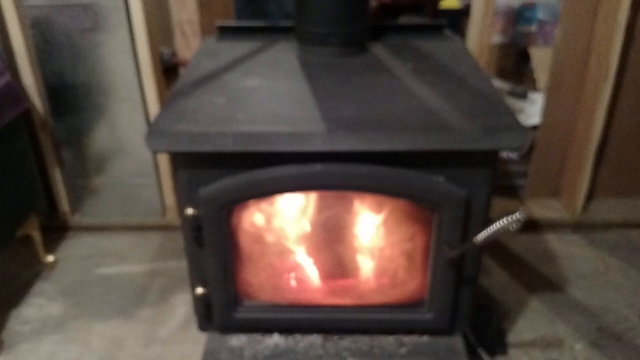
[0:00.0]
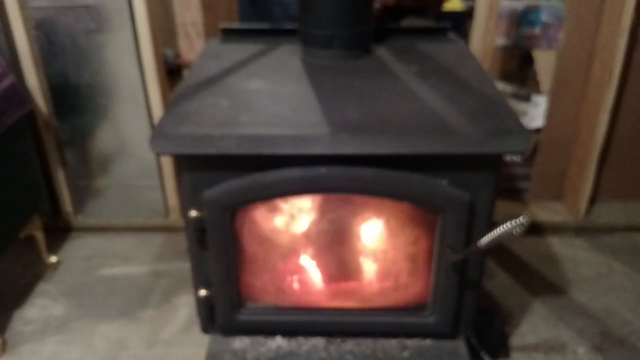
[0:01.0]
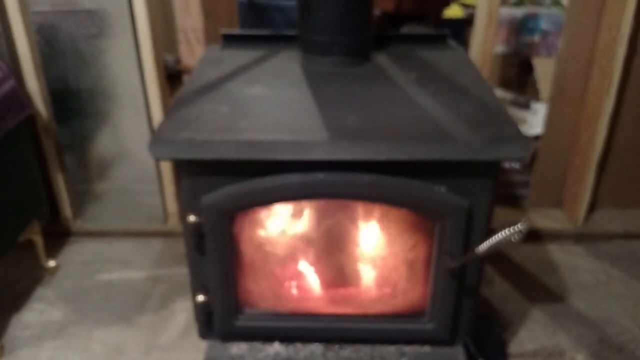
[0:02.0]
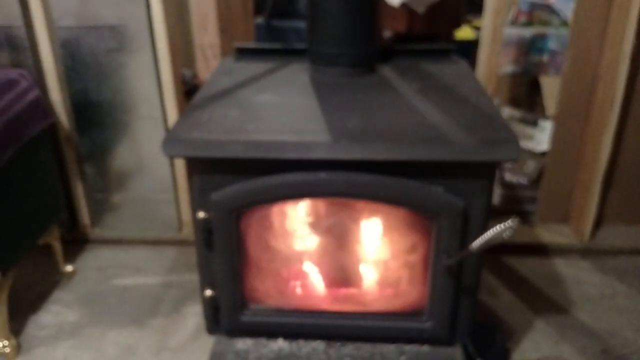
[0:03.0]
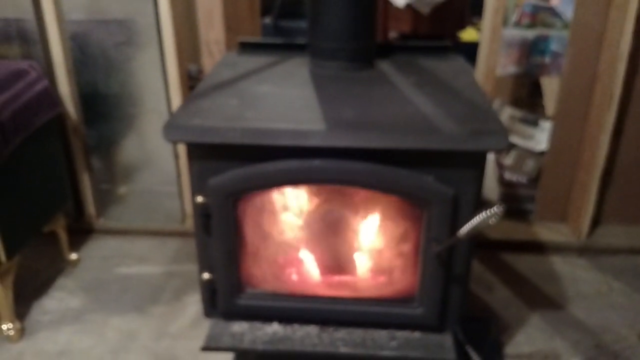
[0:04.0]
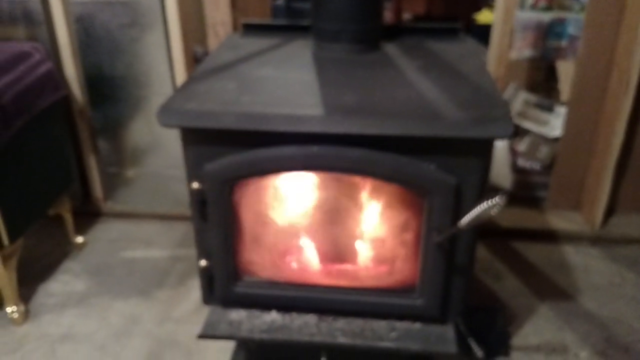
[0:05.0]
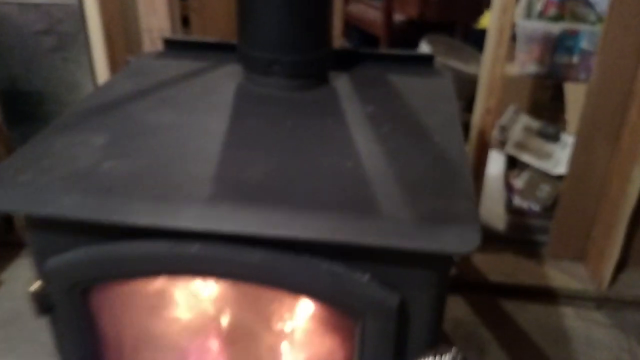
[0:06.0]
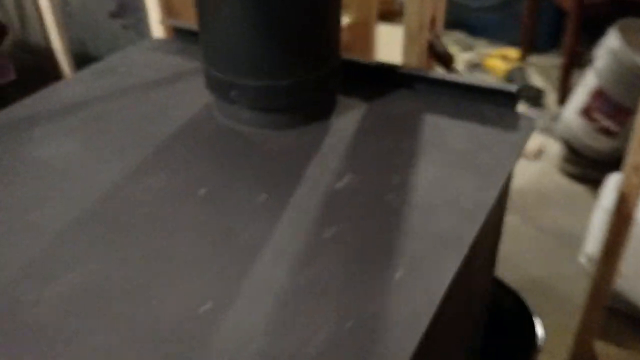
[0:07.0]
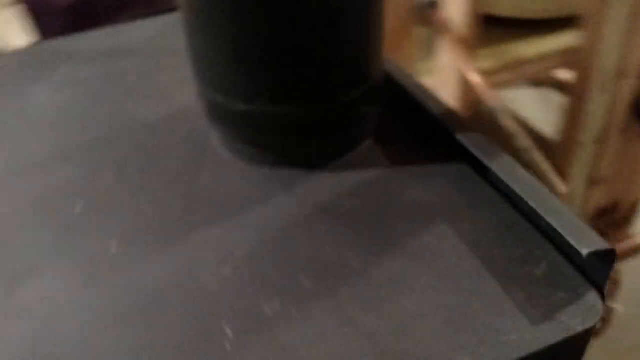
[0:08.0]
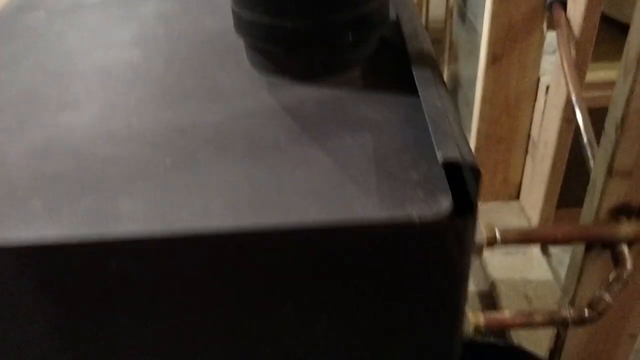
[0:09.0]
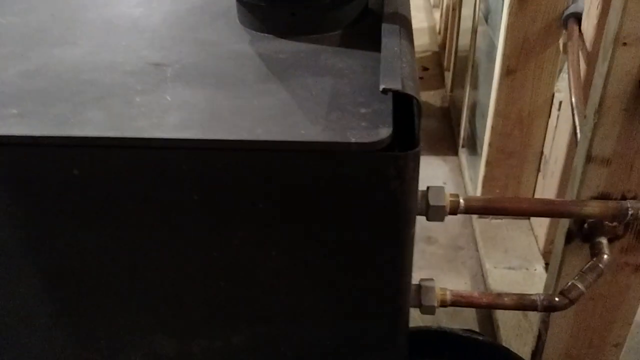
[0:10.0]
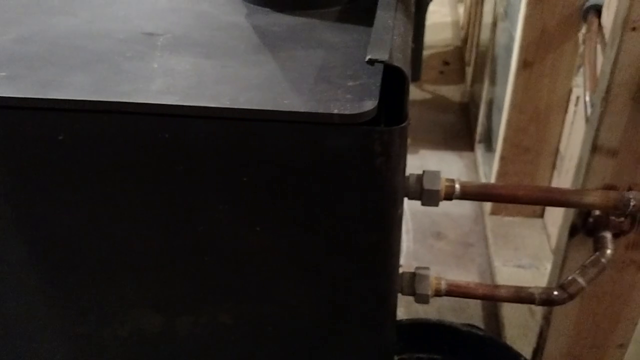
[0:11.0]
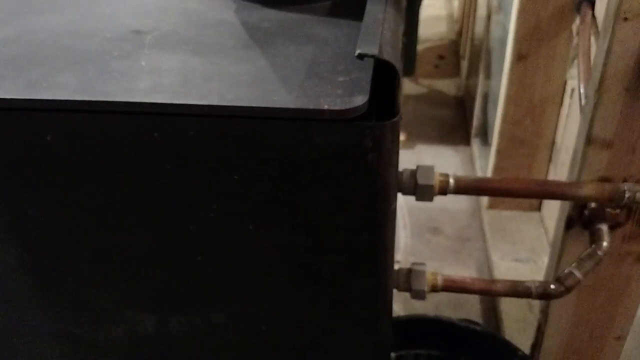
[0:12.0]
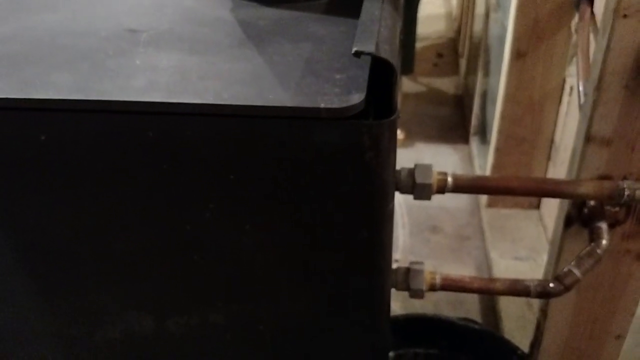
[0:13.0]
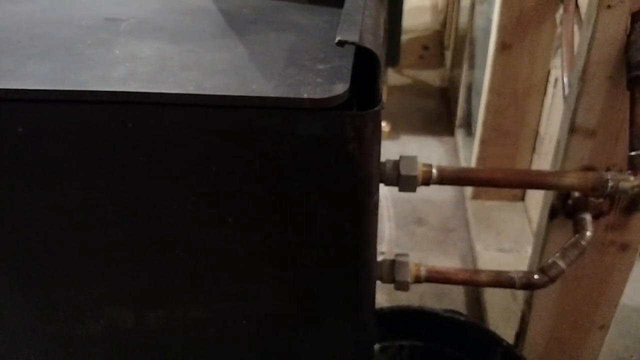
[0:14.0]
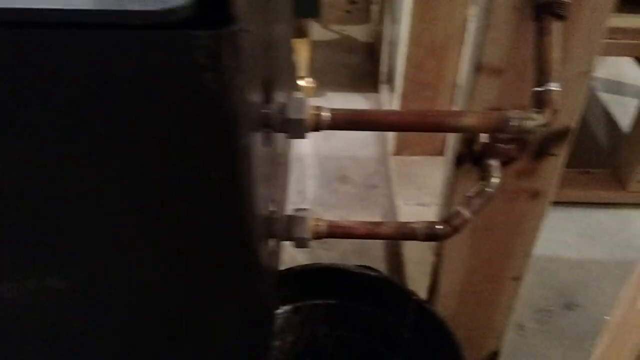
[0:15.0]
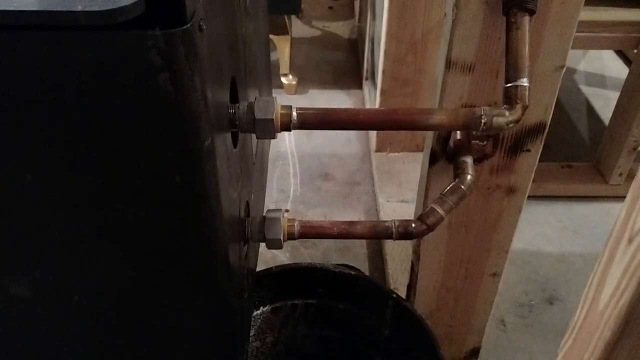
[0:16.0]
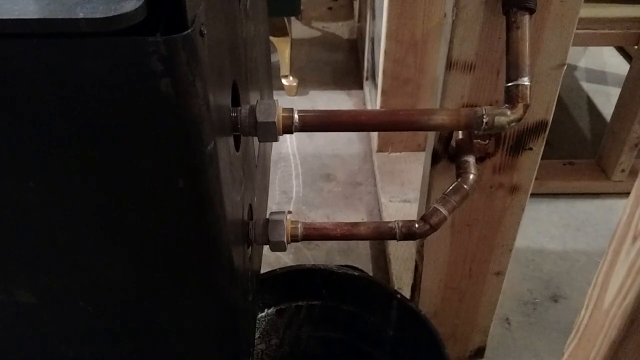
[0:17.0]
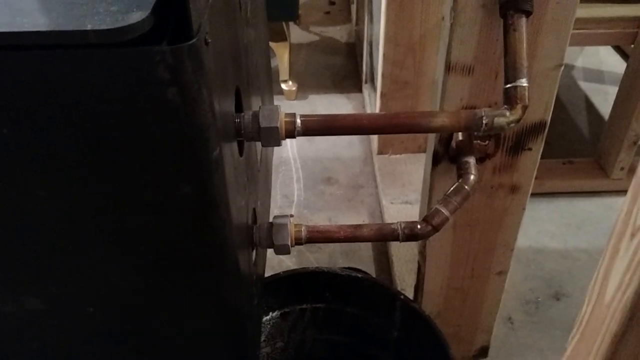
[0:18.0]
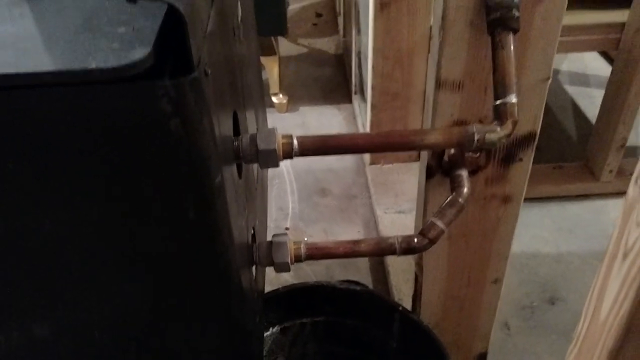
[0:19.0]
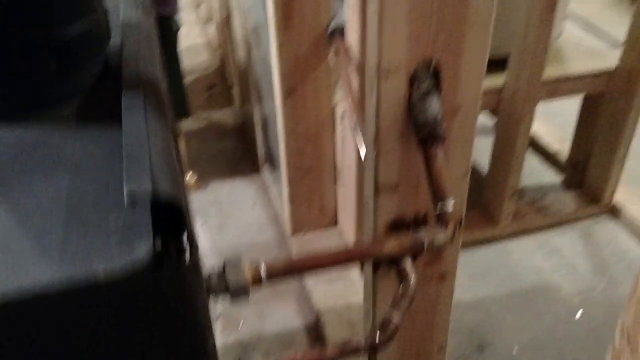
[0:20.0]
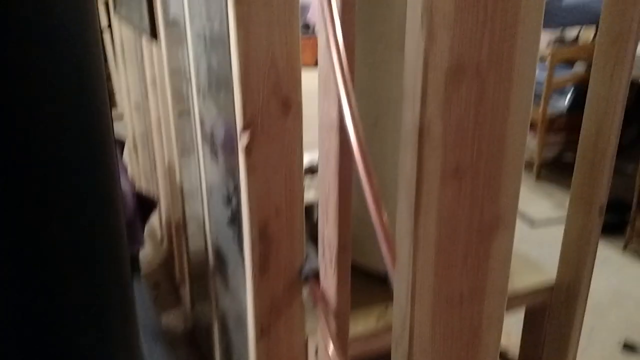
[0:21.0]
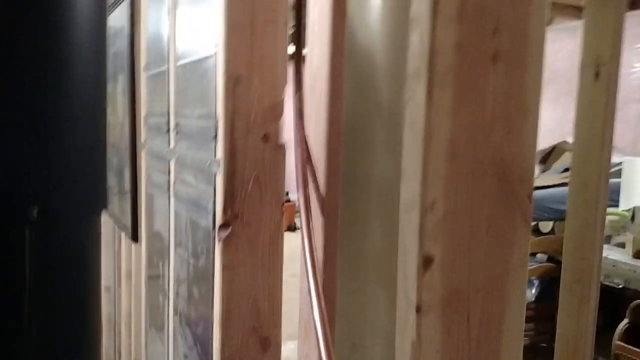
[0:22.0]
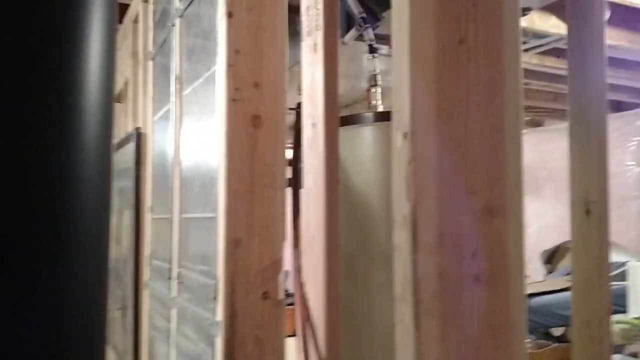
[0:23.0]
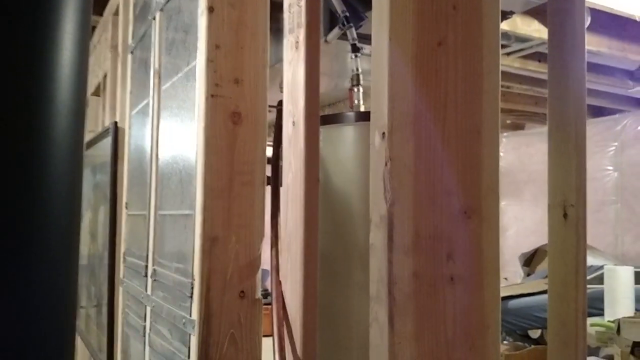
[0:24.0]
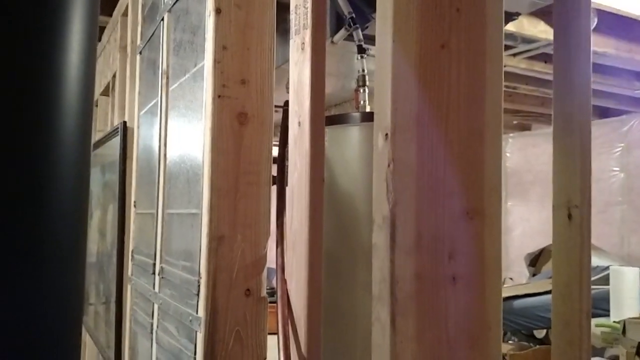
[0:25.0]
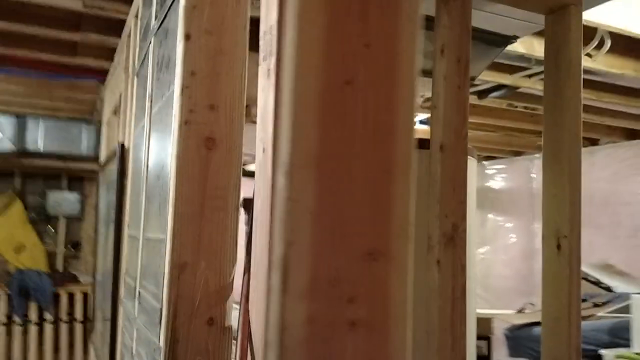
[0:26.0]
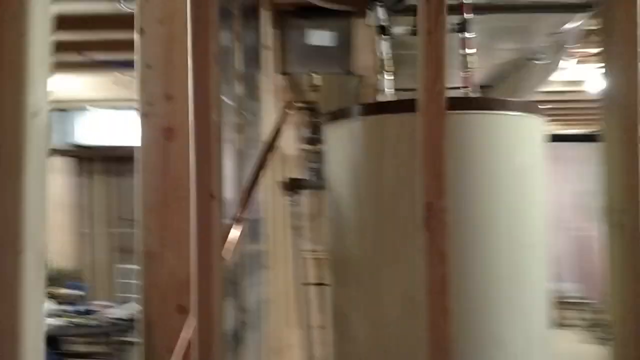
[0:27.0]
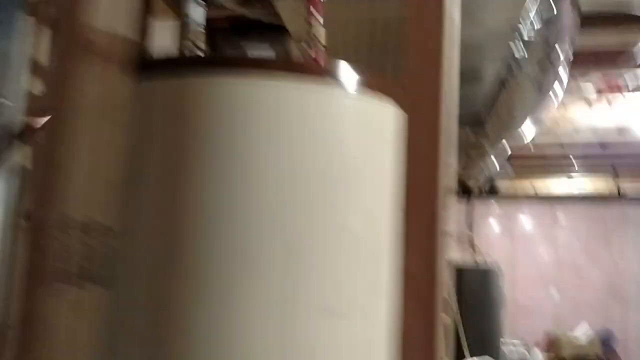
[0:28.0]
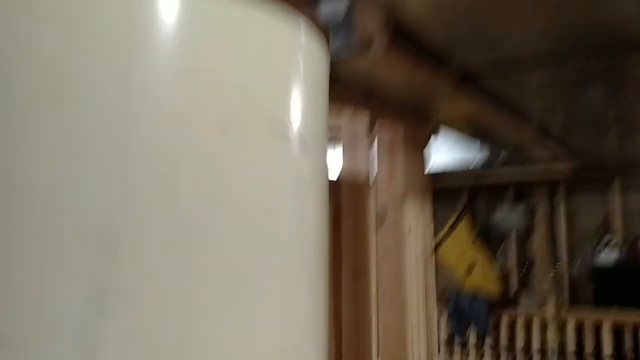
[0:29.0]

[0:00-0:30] A fireplace apparently stands in a living room. The fire is well lit and seems to be using a very powerful energy source. Pipes are connected to the fireplace, suggesting it might be using gas, and there is a tank at the back that is apparently the energy source. The person holding the camera moves around, going to the back to show where the pipes connect to the fireplace, and going up to the roof where the pipes connect to the energy source. The living room is not well kept and is not clean.